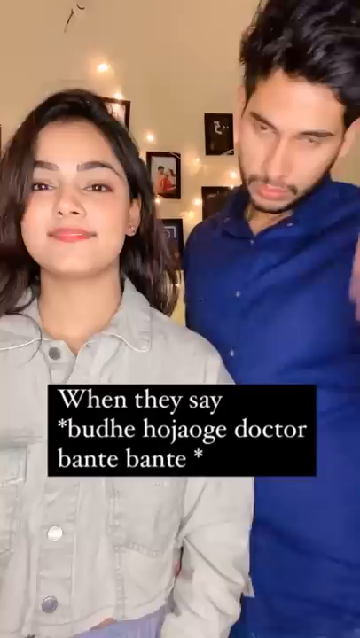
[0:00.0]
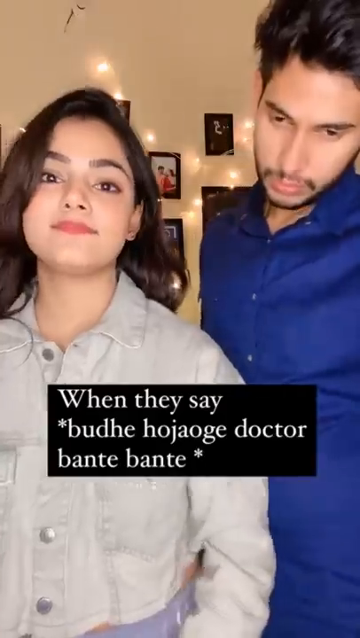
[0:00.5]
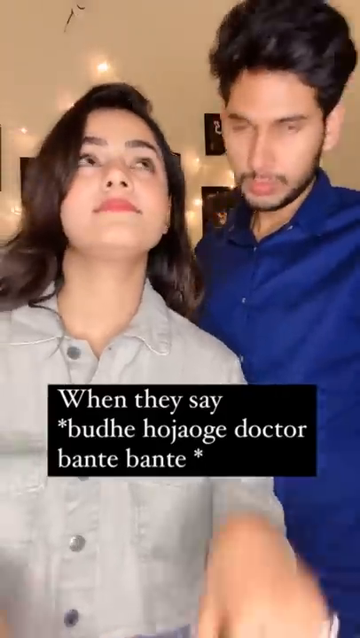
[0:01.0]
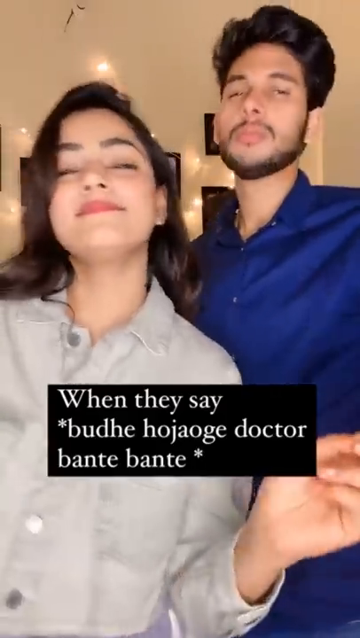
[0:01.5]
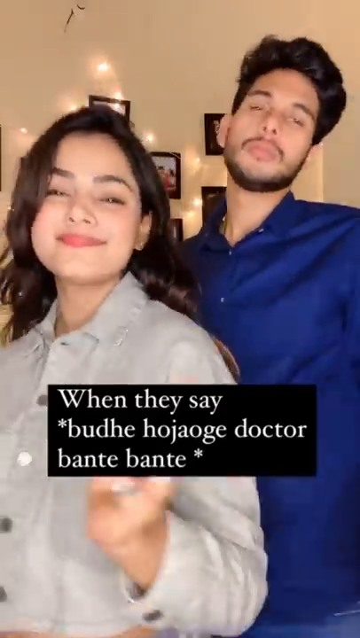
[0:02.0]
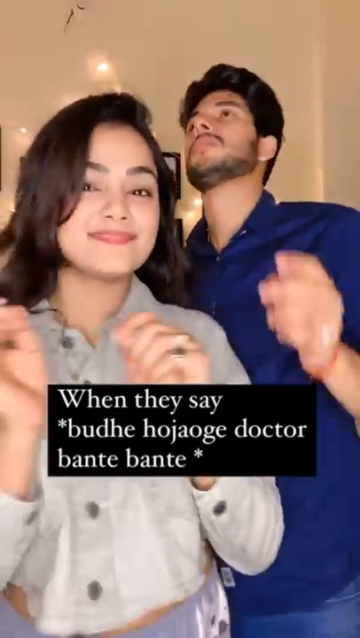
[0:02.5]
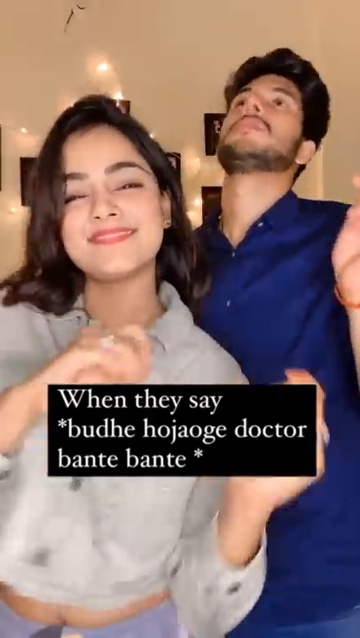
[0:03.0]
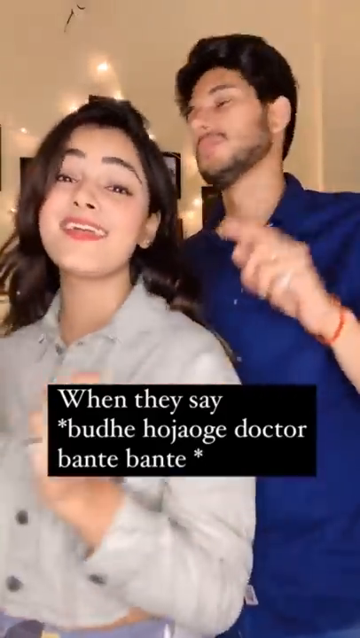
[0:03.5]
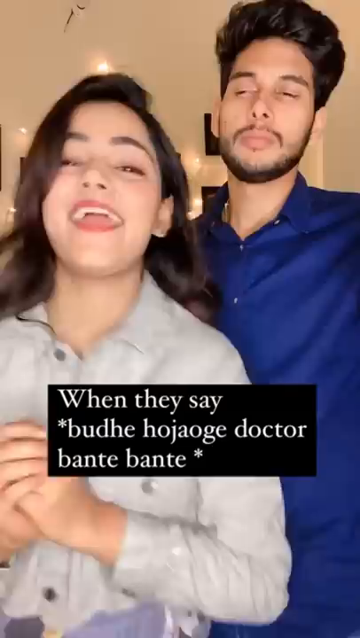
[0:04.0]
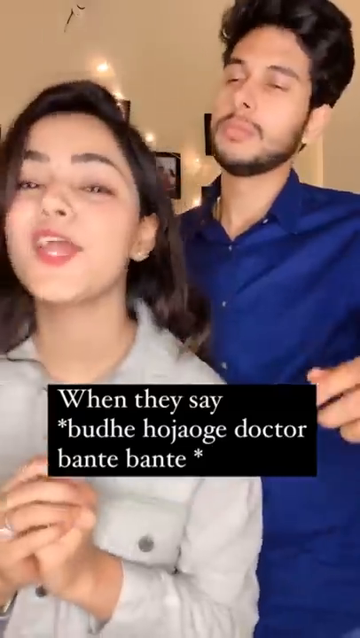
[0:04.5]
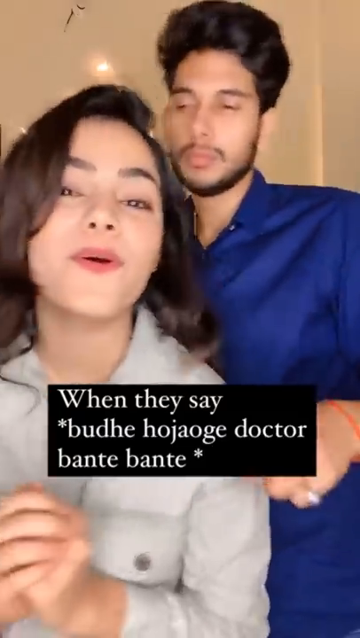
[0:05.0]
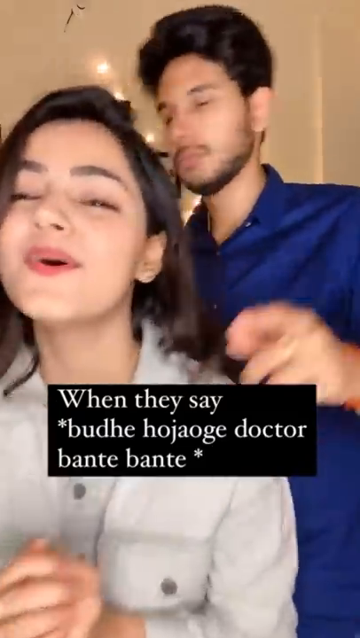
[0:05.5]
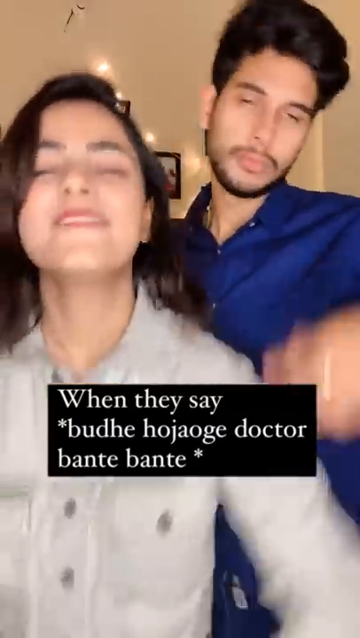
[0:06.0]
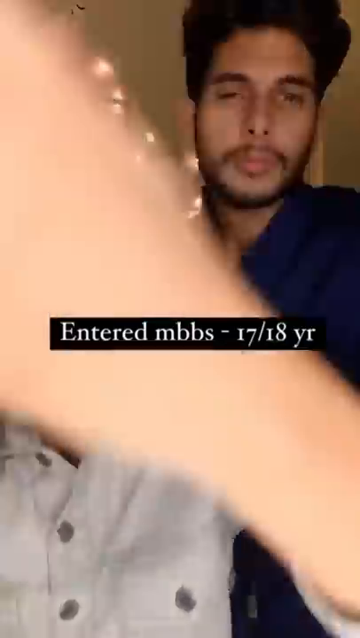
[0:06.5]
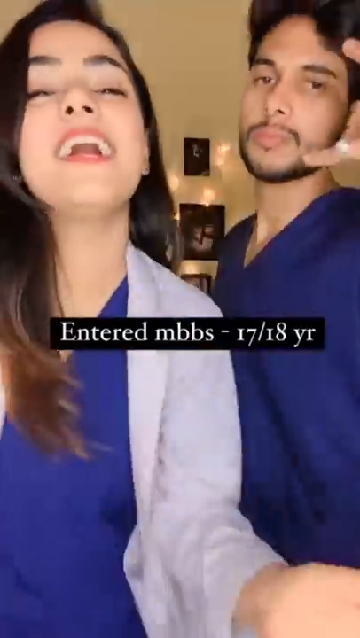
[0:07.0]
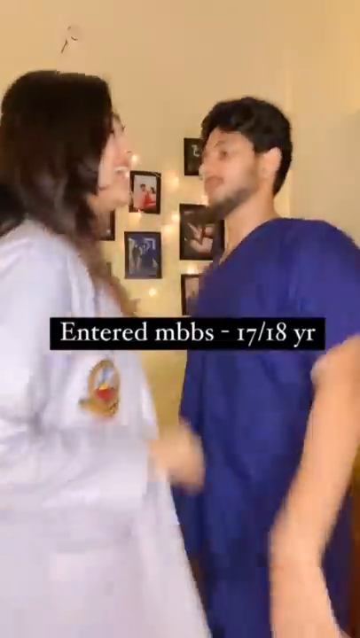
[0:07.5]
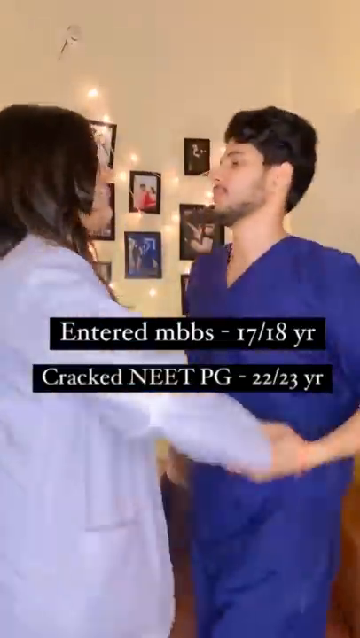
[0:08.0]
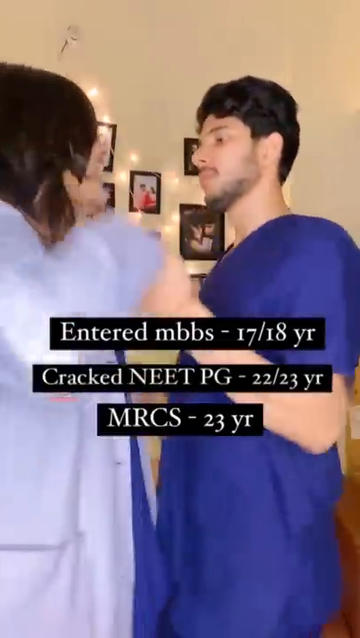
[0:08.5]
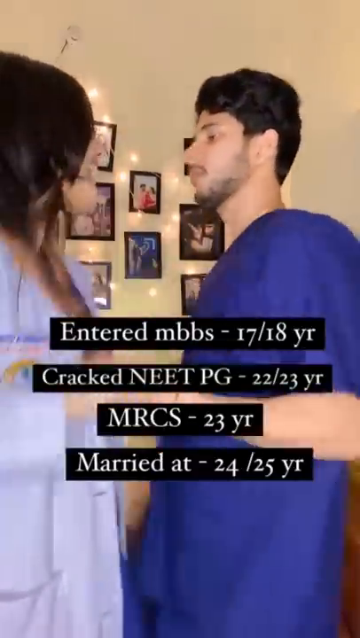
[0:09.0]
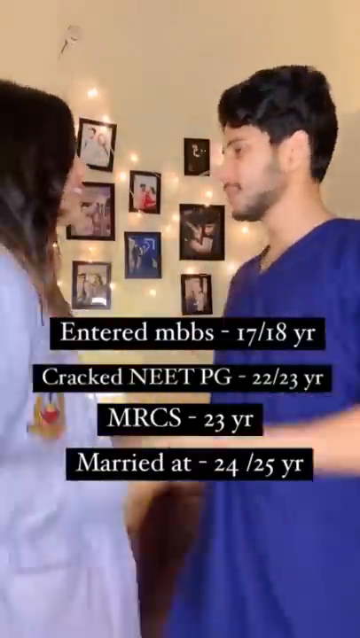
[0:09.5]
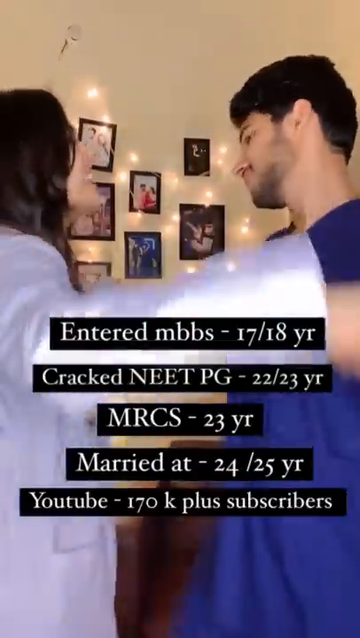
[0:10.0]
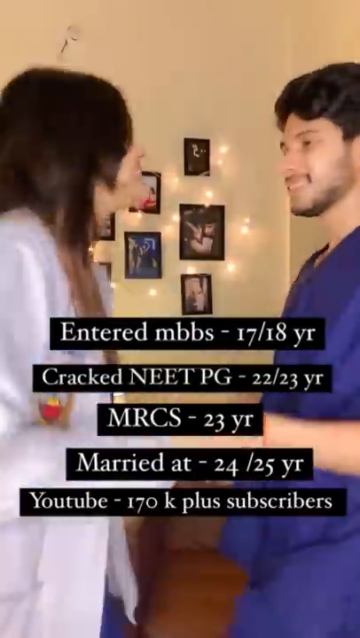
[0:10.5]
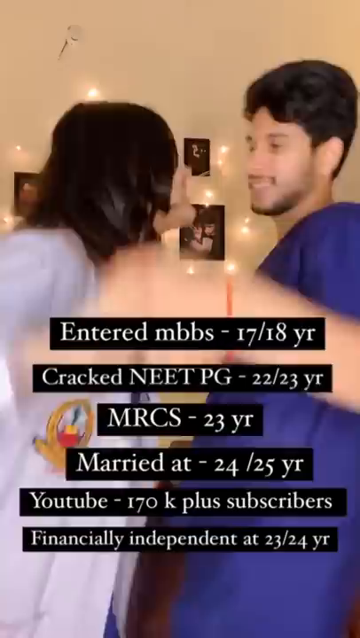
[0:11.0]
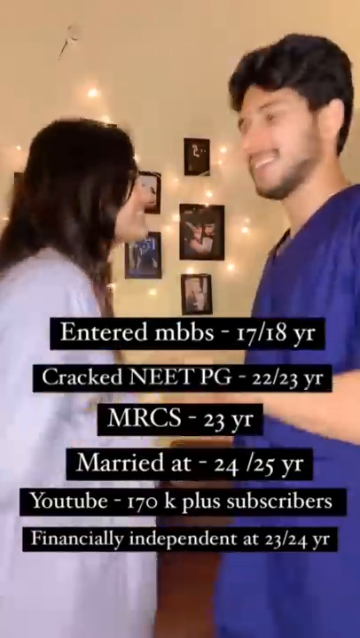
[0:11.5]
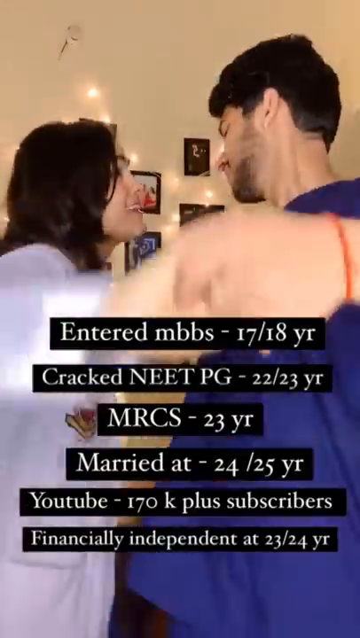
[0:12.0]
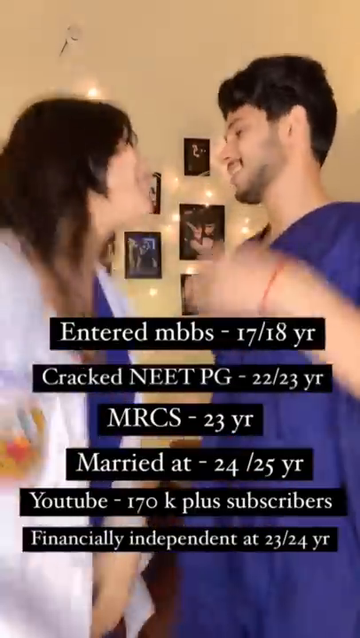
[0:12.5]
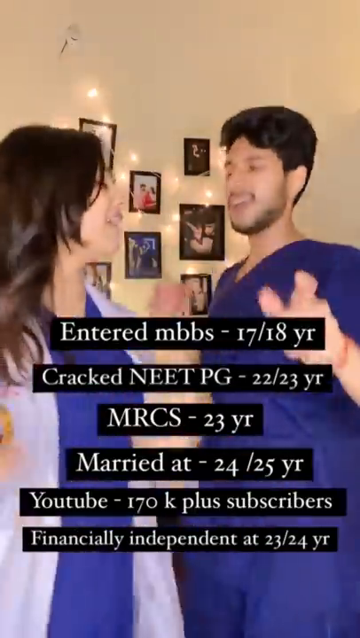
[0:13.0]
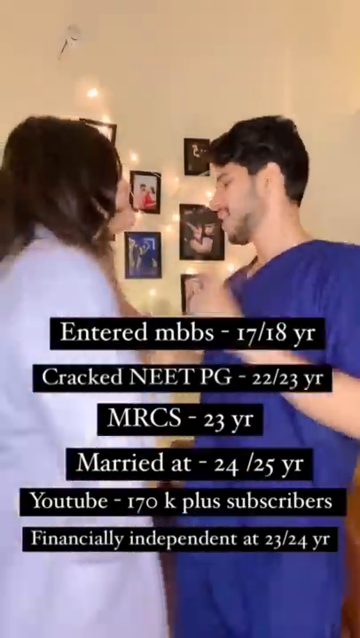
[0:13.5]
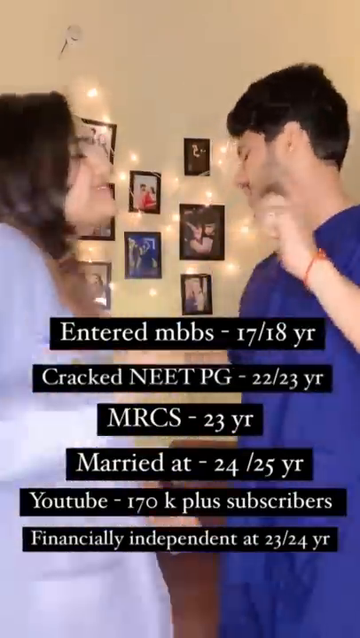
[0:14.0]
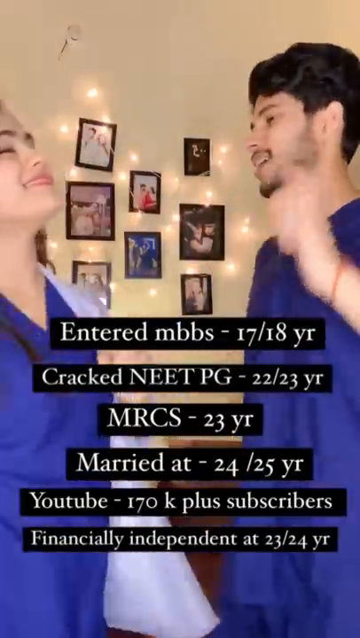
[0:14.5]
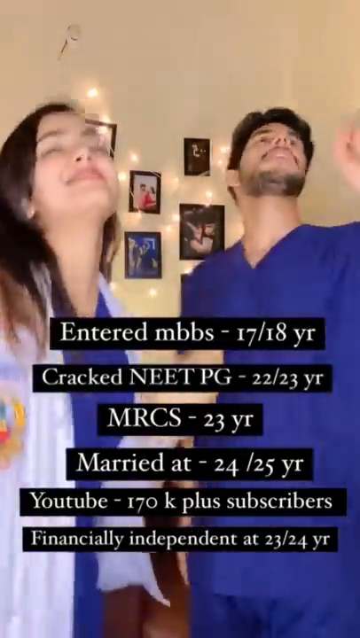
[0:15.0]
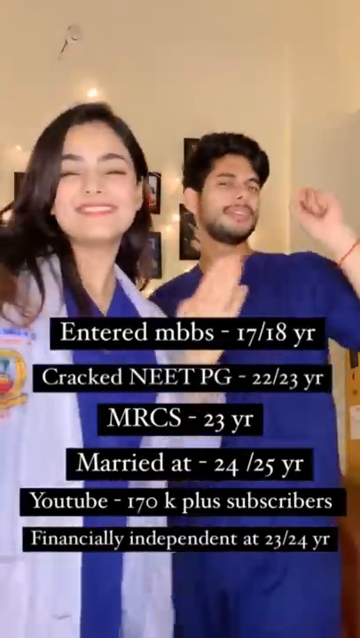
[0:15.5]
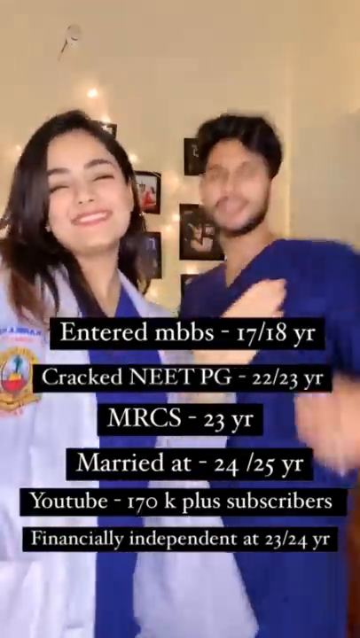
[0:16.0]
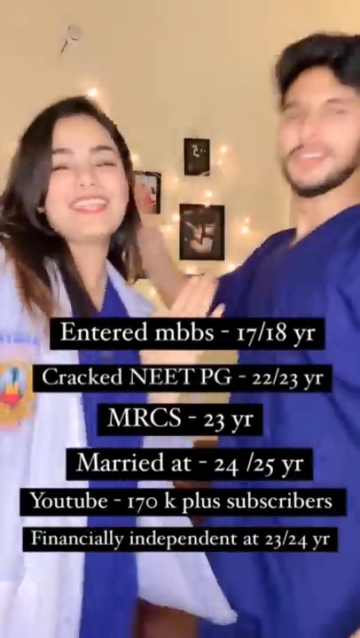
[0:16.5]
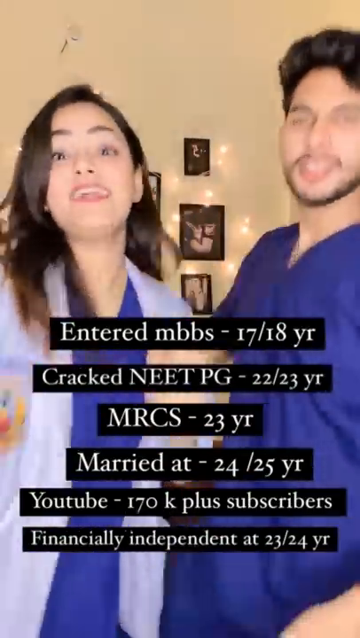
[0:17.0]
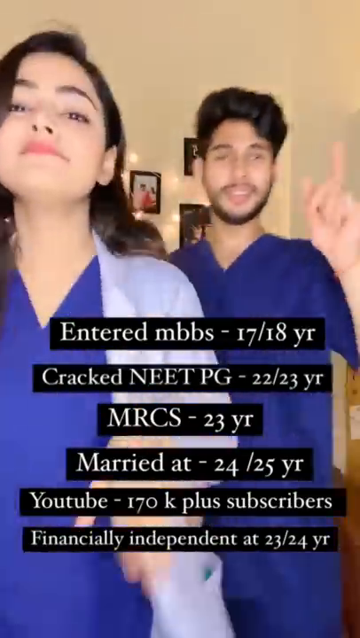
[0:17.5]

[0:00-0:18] Two young people dance, and after they say something, they switch into clothing worn at a doctor's office. They start off in plain clothes, each wearing a top. They then shake their hands, and both are in scrubs, with her wearing a medical uniform or a doctor's coat. They are in a room with good lighting and pictures in the background. There is a lot of text describing how they are together and how they are doing in life, with some kind of statistics meant to show how they have been doing in life.